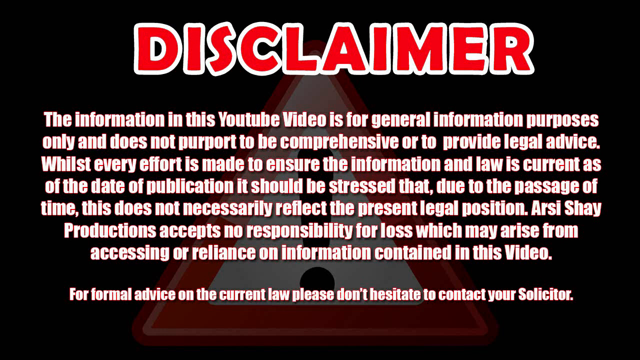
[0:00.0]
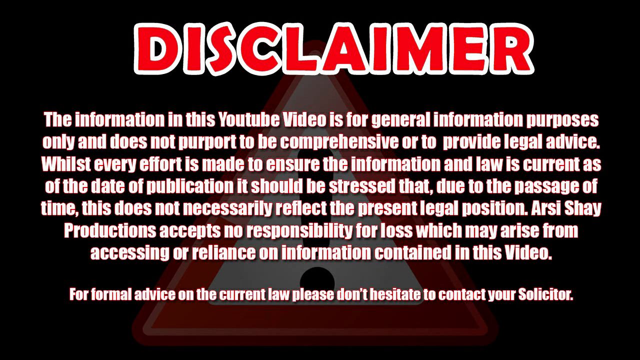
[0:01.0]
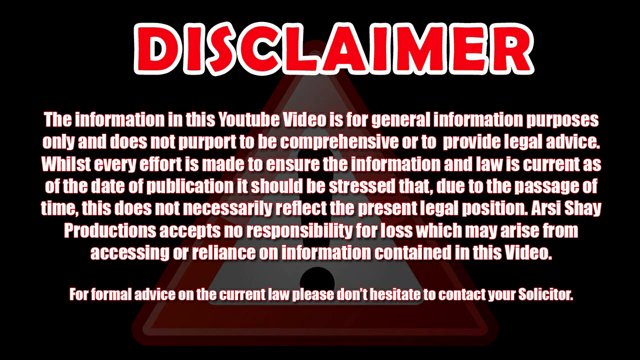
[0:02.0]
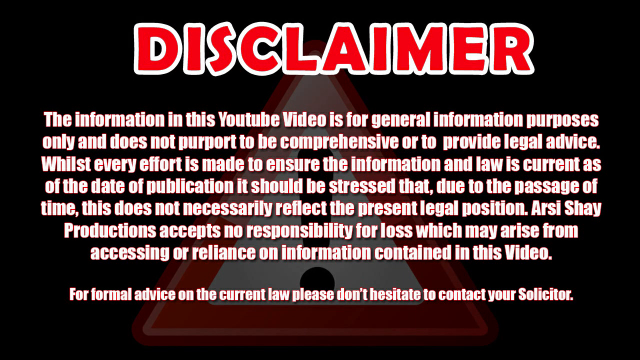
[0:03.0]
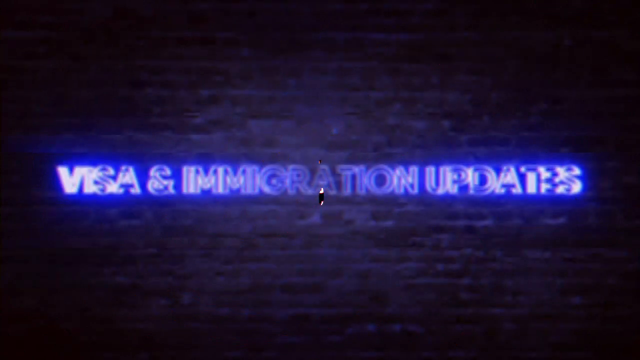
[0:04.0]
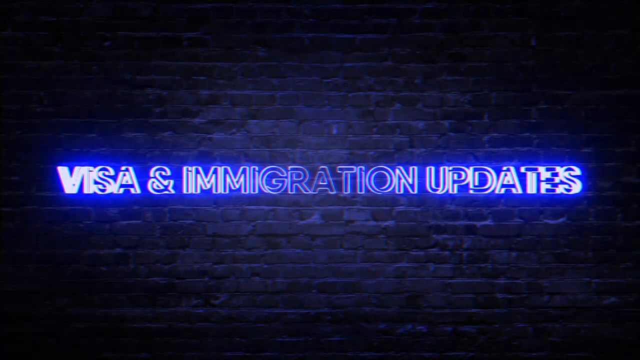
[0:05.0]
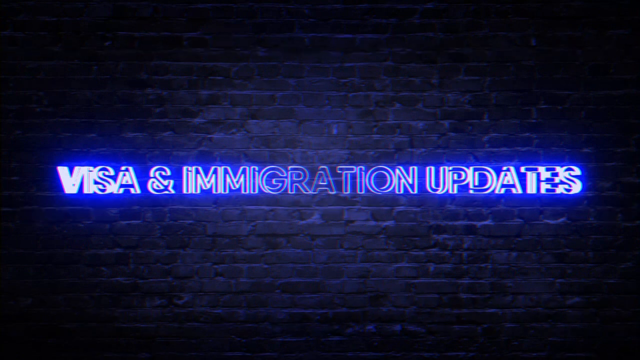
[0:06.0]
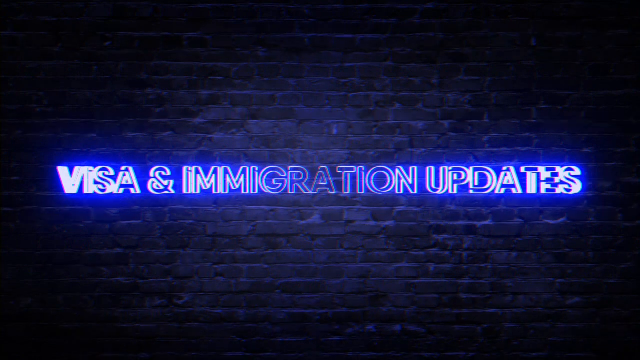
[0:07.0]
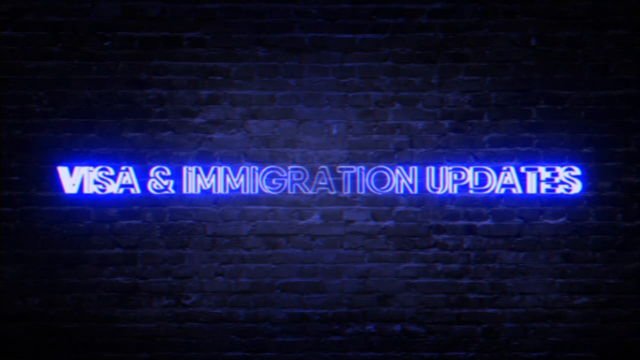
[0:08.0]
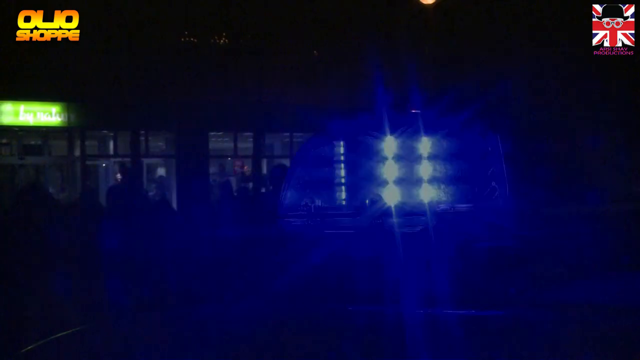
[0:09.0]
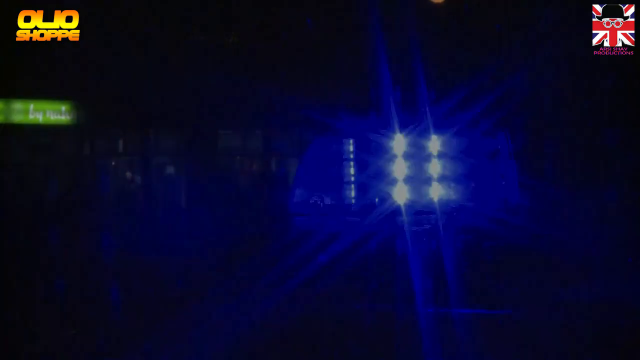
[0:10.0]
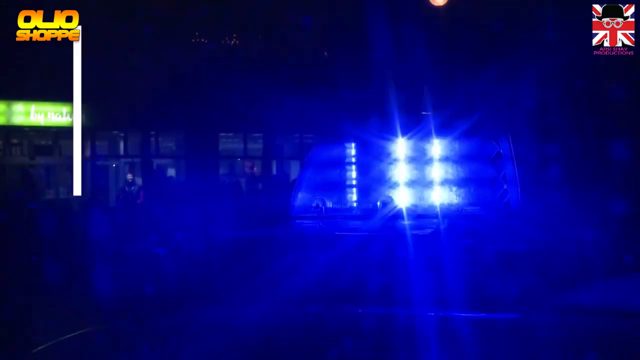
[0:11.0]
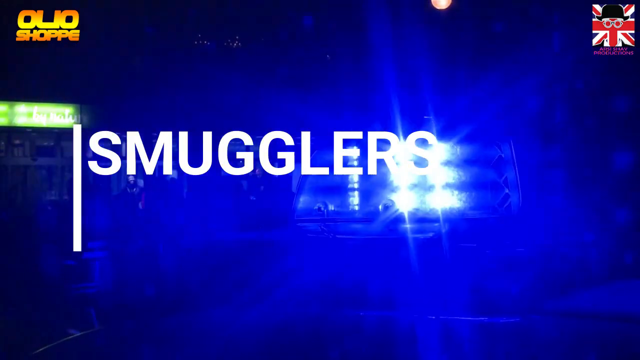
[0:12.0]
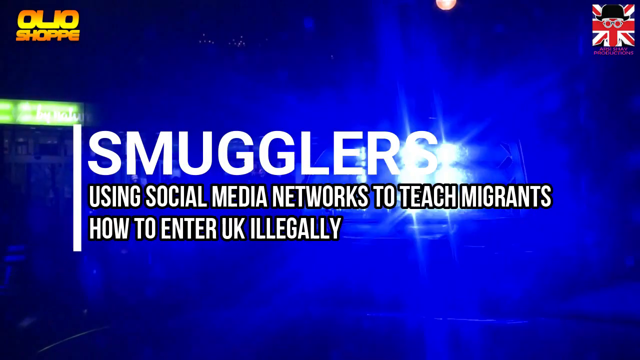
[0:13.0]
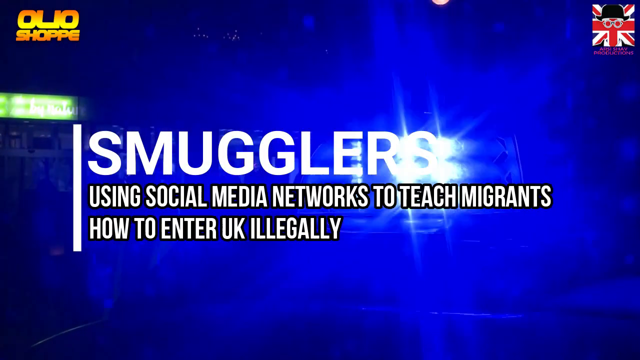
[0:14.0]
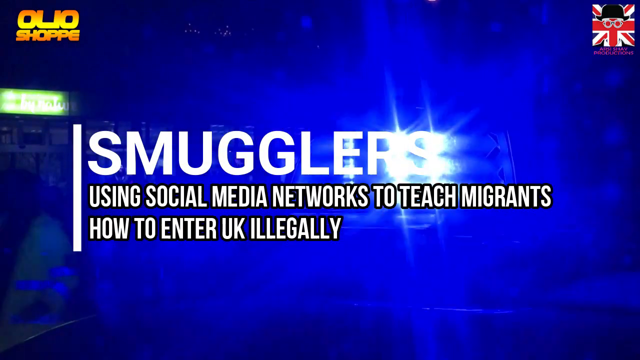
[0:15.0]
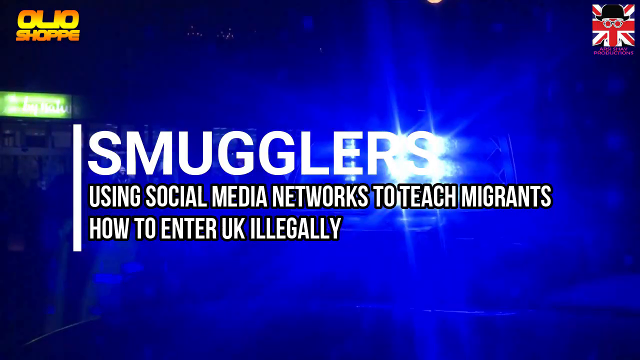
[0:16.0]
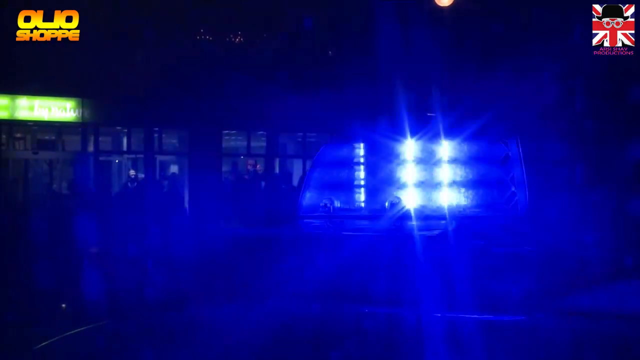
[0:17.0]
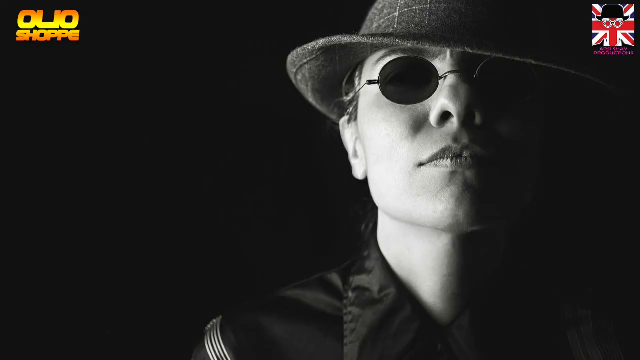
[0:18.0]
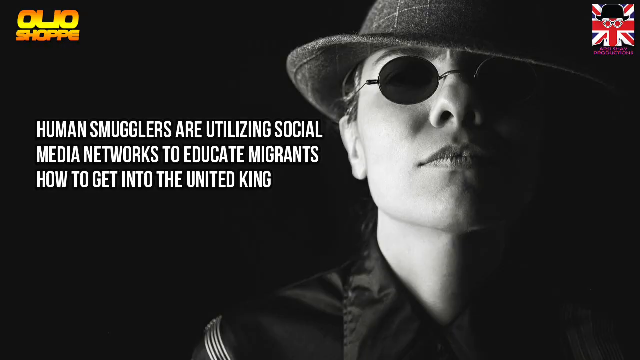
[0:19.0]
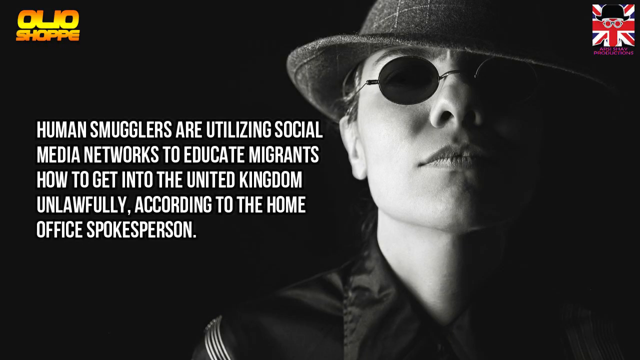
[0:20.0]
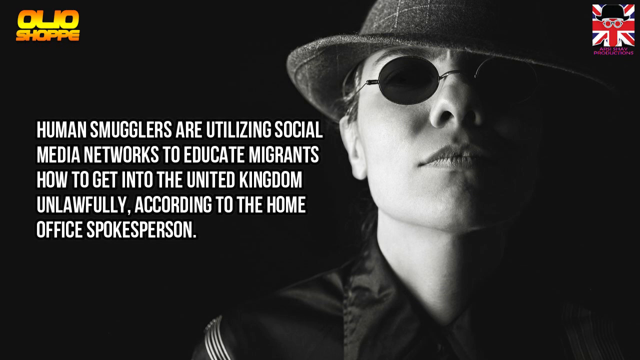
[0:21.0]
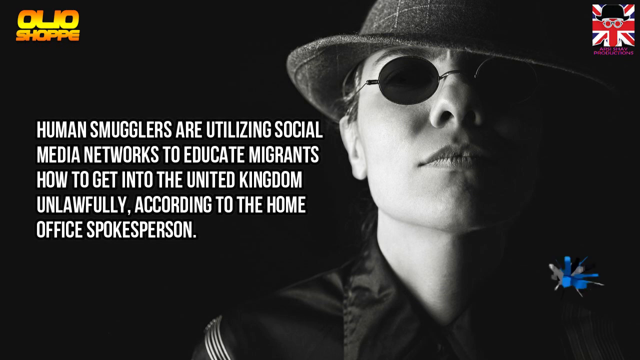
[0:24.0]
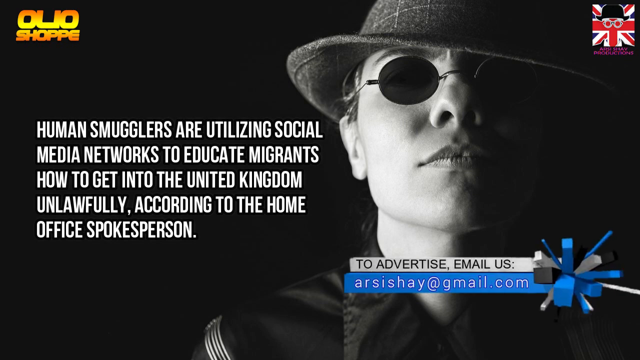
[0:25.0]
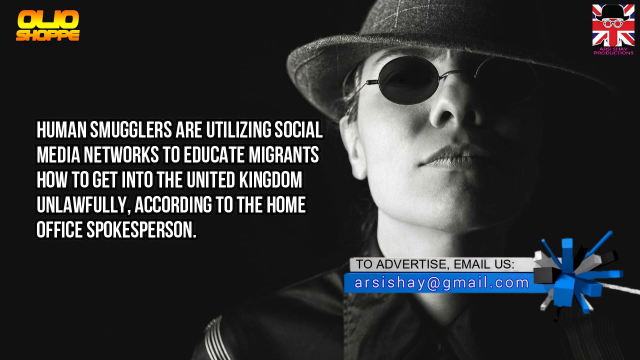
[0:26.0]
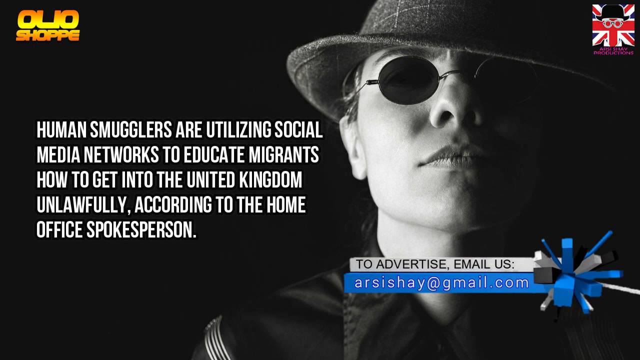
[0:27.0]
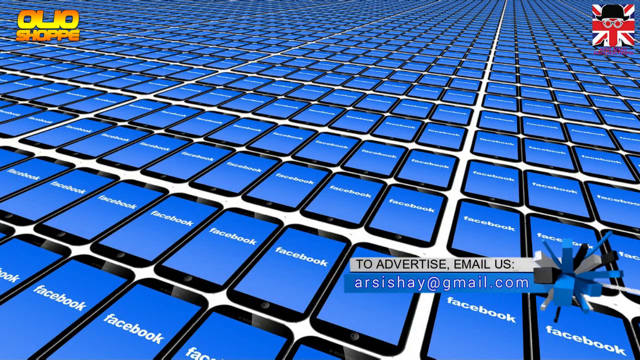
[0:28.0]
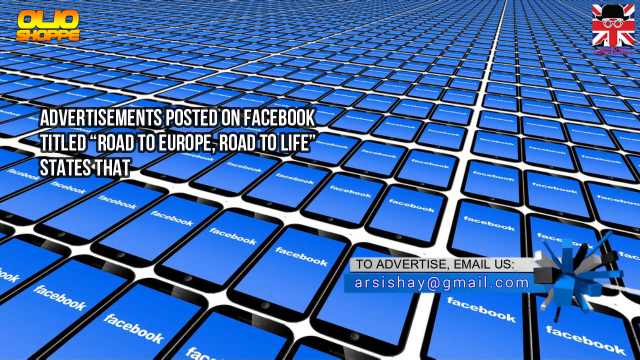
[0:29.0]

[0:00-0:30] The video opens with a very large disclaimer: in large red, bold caps outlined in white on a black background, it reads "disclaimer." Below are maybe seven or eight lines of white text giving a disclaimer and saying that this is all just a YouTube video. The video proper then begins with "Visa and Immigration Updates" in purple neon light against a dark brick wall background with black and purple tones. What looks like a flashing light follows. A white headline appears reading "smugglers" in all white caps, and underneath, in smaller white caps, "using social media networks to teach migrants how to enter UK illegally." Next, a man with a defiant chin-up look is shown in shadow on the right side, wearing a fedora and round black sunglasses. On the left, text in all caps reads "human smugglers are utilizing social media networks to educate migrants how to get into the United Kingdom unlawfully according to the home office spokesperson." The scene changes to a blue background that looks like a keyboard but is actually a bunch of phones showing the blue Facebook background. Text on the left reads "advertisements posted on Facebook titled, Road to Europe, Road to Life, states that boats are the cleverest route as all its components are built from iron with a depth of 12 millimeters."